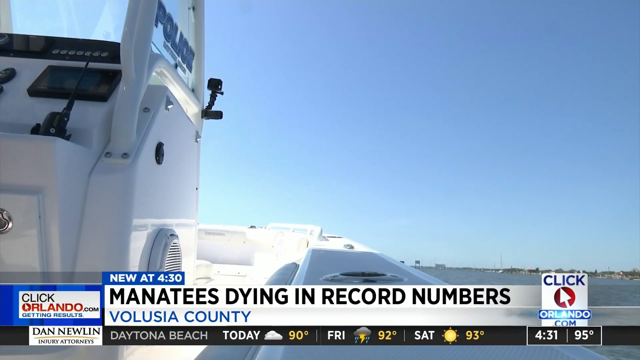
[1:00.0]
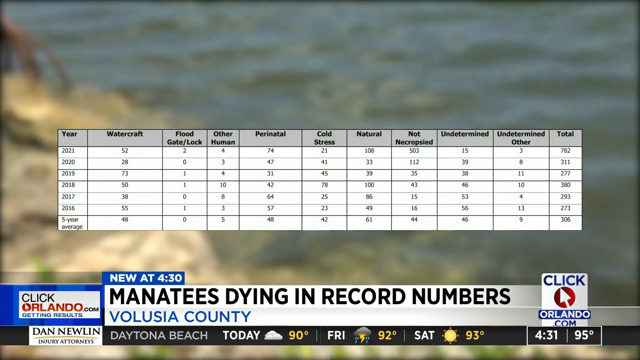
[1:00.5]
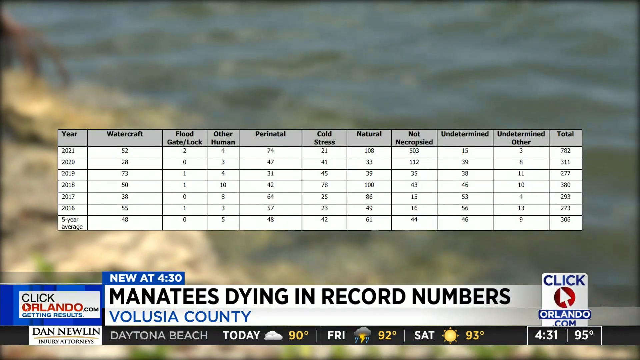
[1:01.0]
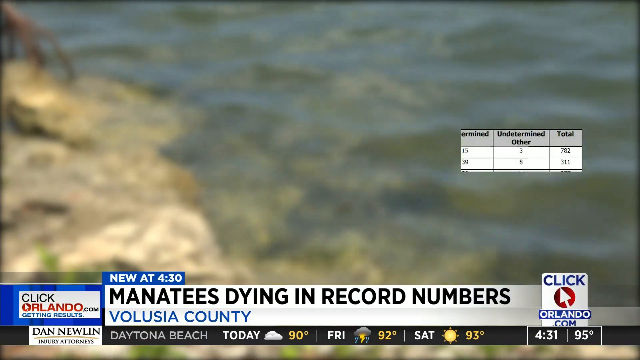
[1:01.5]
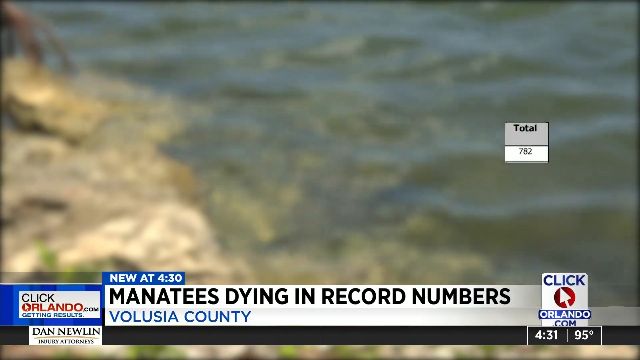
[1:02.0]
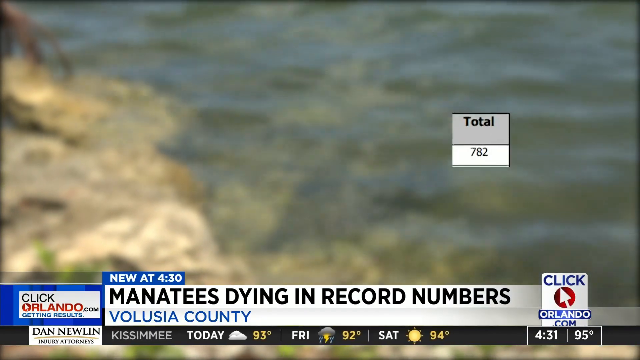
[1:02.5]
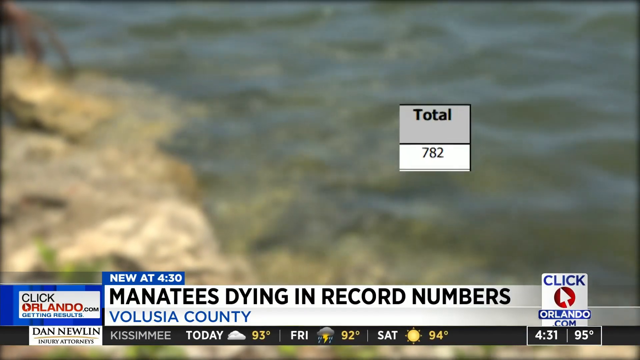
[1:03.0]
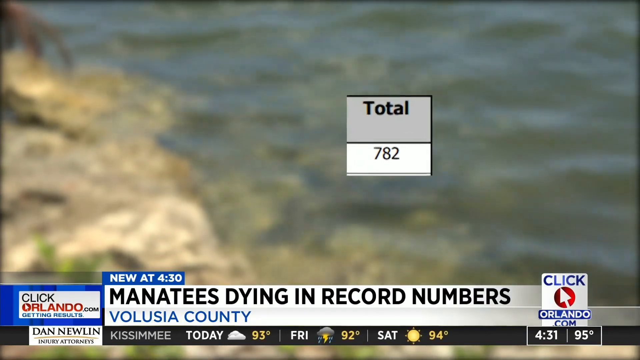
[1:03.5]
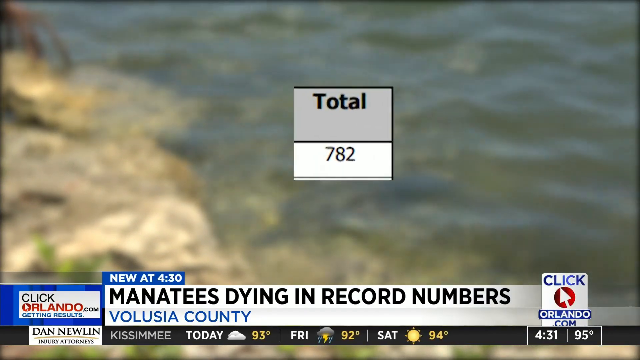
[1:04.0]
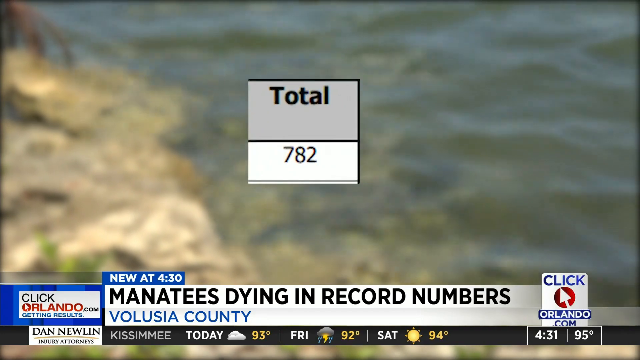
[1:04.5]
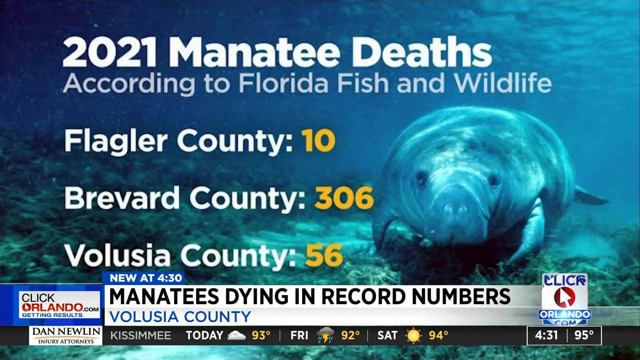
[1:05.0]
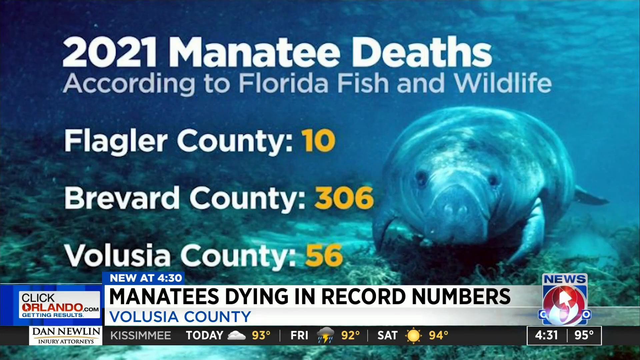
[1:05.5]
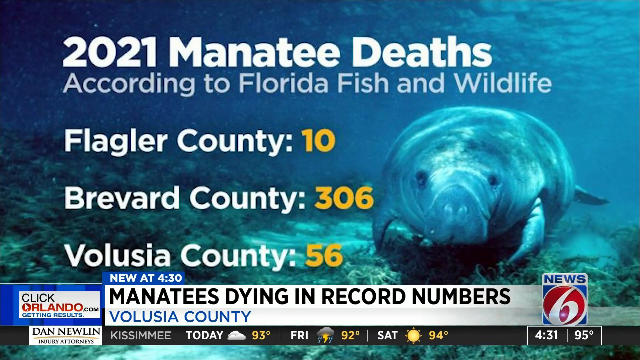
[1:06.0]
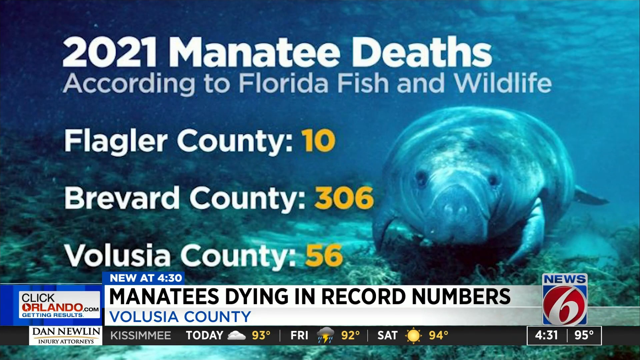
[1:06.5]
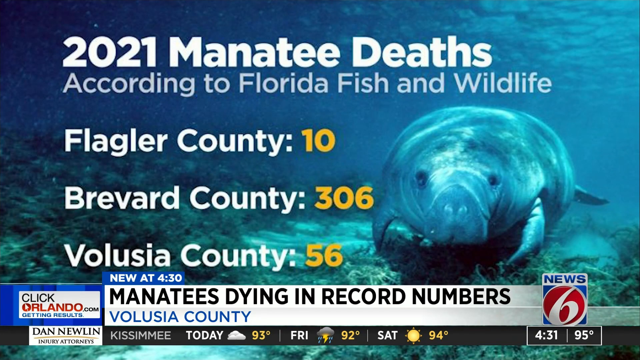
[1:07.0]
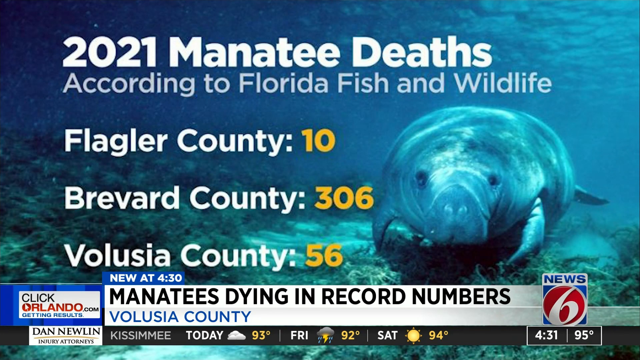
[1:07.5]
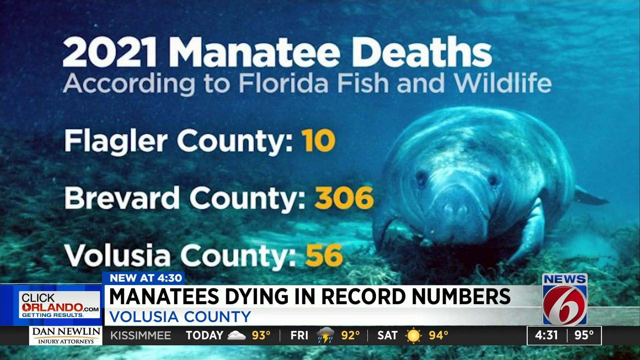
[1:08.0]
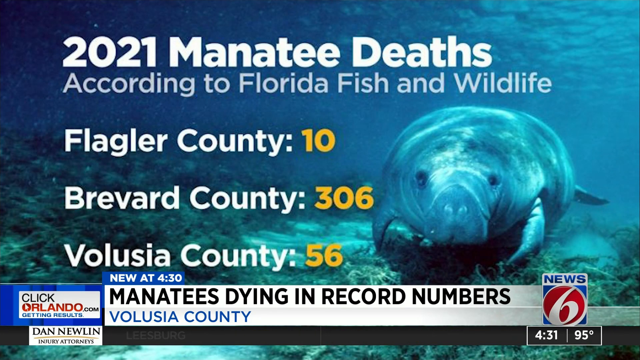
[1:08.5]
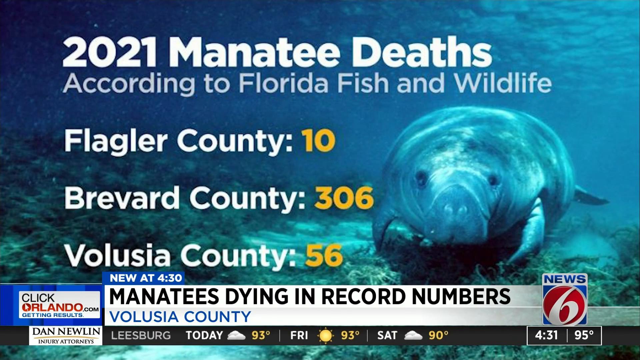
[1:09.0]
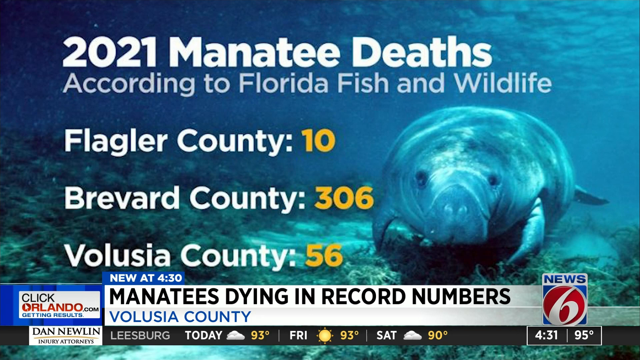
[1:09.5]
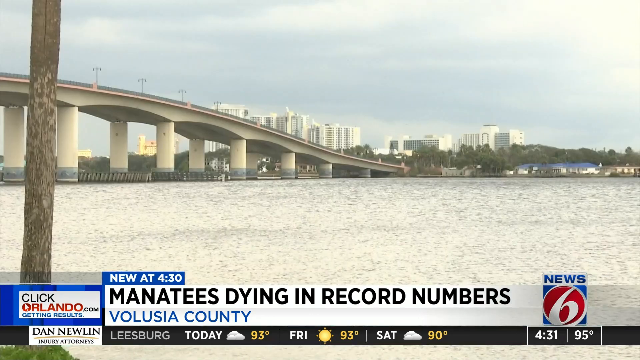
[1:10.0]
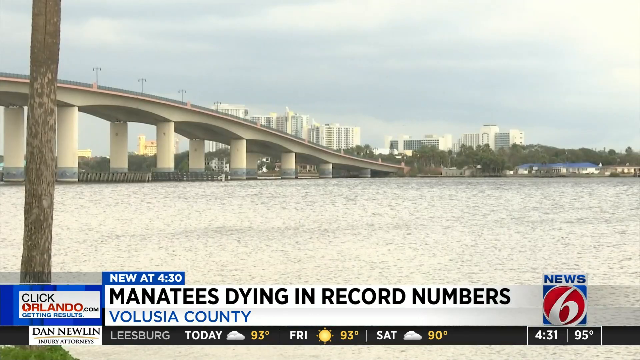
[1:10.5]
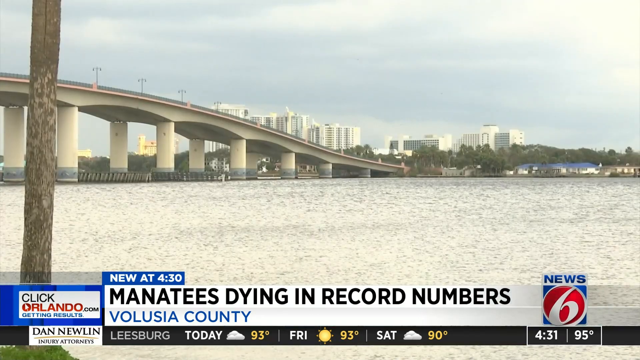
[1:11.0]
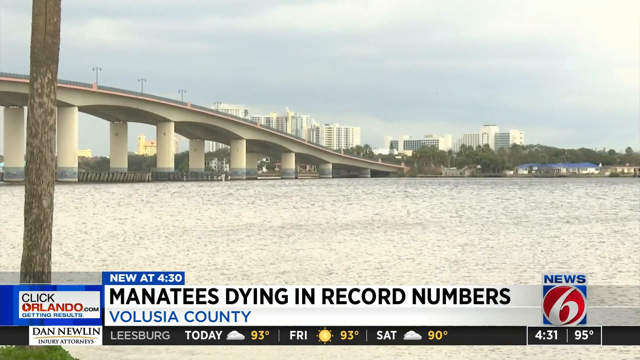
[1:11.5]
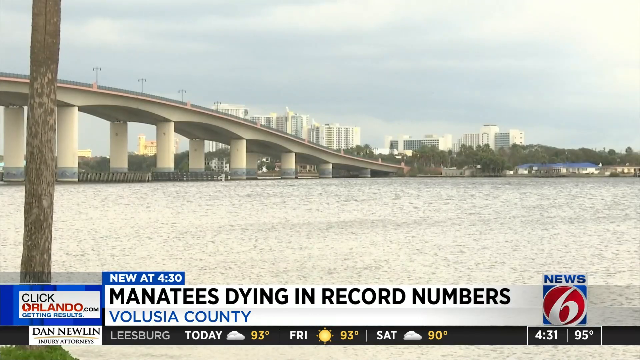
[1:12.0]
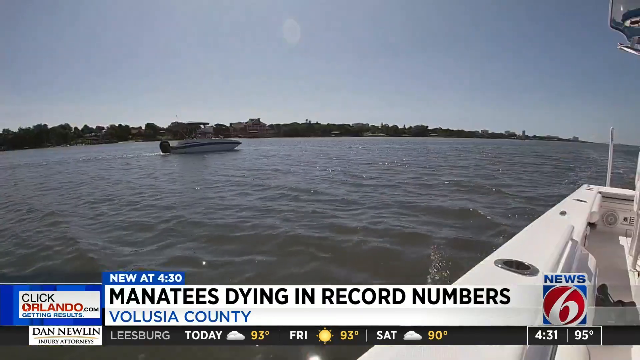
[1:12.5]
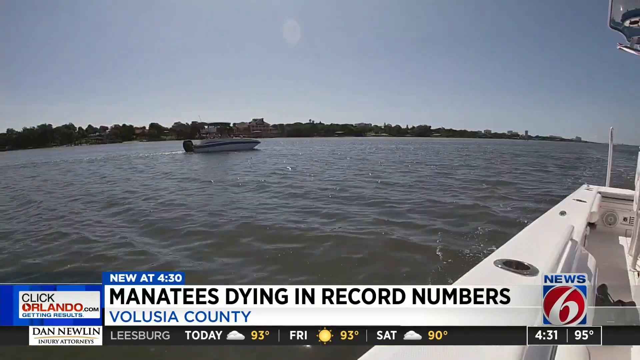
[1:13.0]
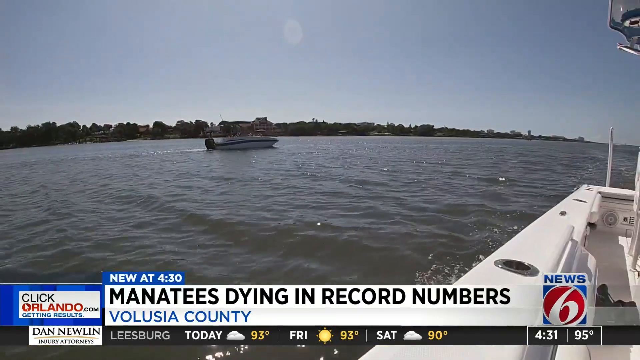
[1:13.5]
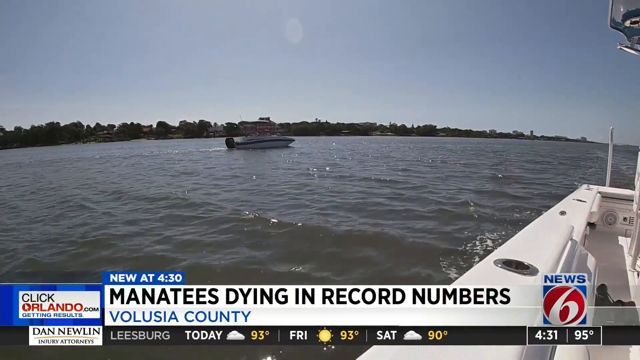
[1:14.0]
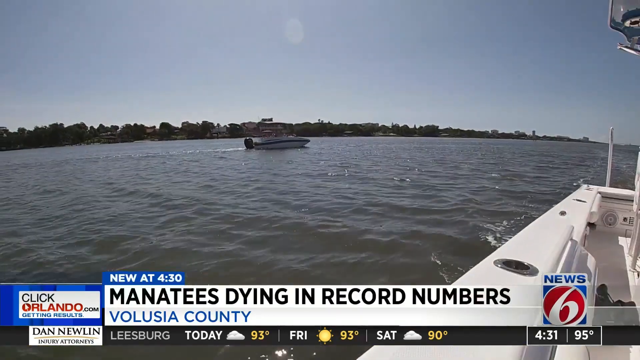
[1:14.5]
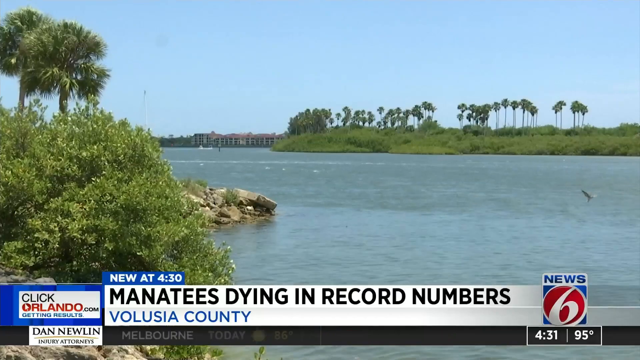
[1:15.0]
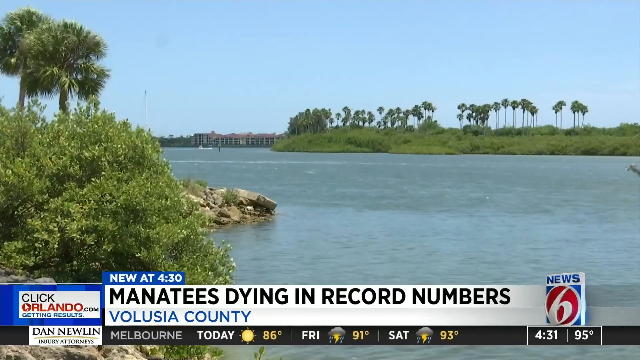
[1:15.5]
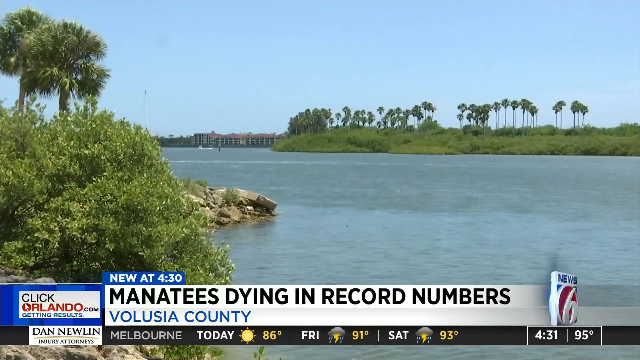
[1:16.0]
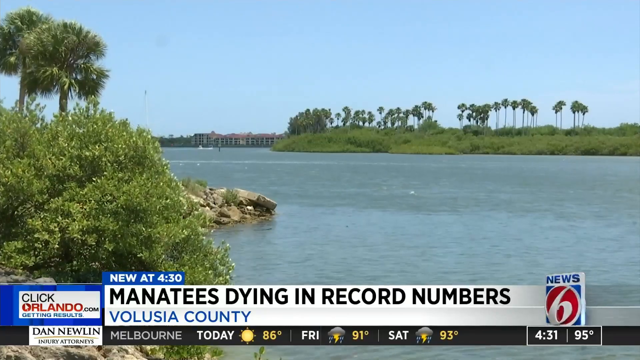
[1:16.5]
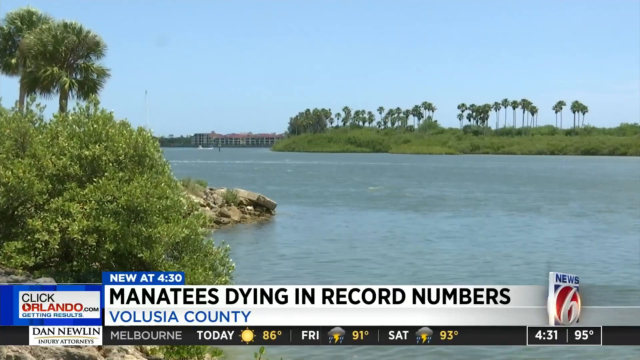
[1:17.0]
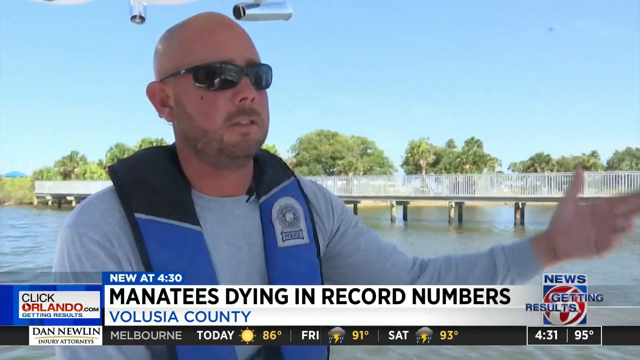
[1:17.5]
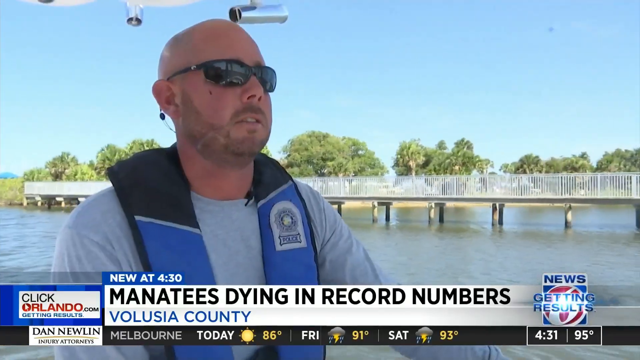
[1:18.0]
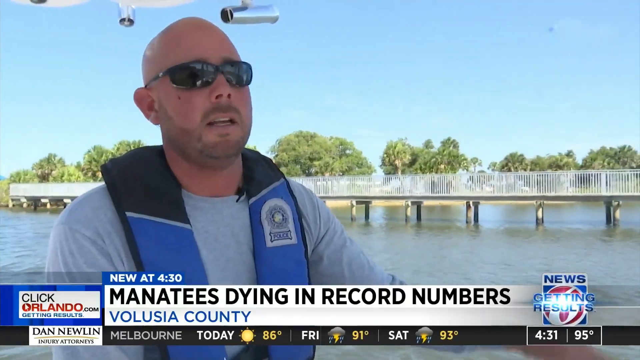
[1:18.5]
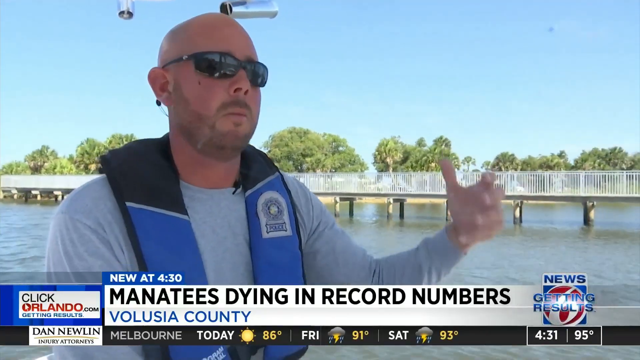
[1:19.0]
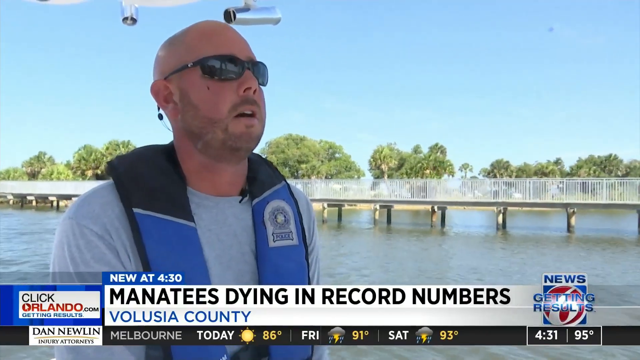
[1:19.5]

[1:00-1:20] A spreadsheet about manatee deaths appears on screen, followed by an infographic about manatee deaths in 2021 listing the details. The bottom of the screen shows 4:31 and 95 degrees, along with "ClickOrlando.com." The infographic lists Flagler County, Brevard County and Volusia County and, citing Florida Fish and Wildlife, shows 10 deaths in Flagler County, 306 in Brevard County and 56 in Volusia County. On the other side of the infographic is an image of a manatee swimming toward the camera. A shot then shows a bridge or highway overpass and another boat passing by in the water. The water is brown and murky, a tree line is visible in the distance, and the white side of the police boat is in the foreground. Another shot shows palm trees and greener shores with buildings in the background, and rocks on the left side of the screen.